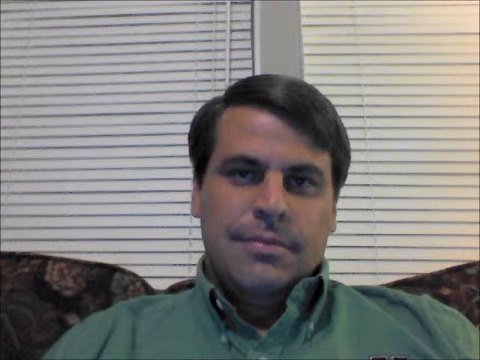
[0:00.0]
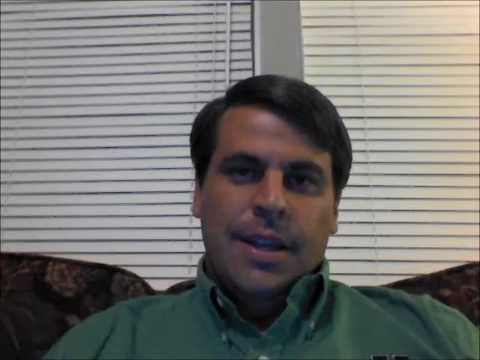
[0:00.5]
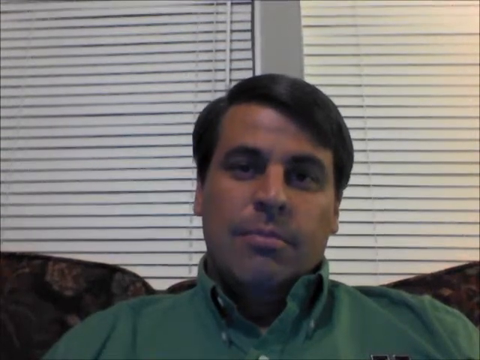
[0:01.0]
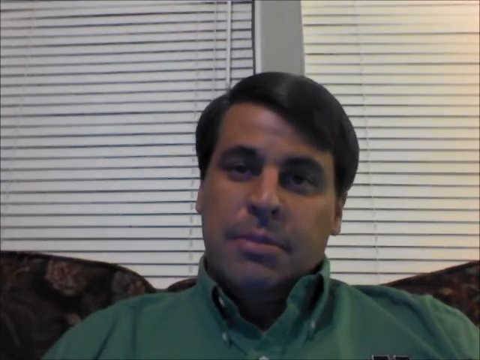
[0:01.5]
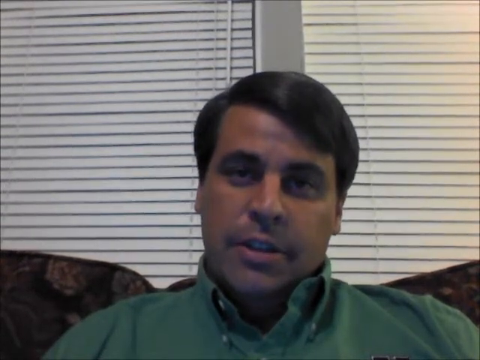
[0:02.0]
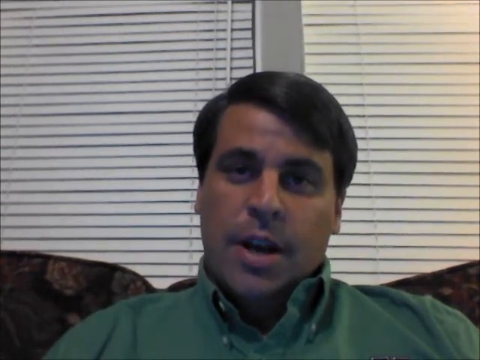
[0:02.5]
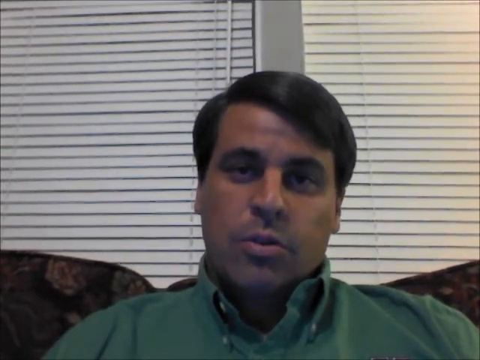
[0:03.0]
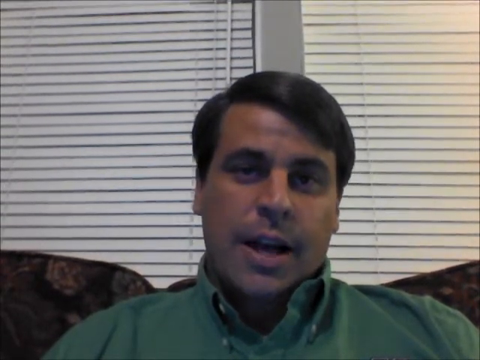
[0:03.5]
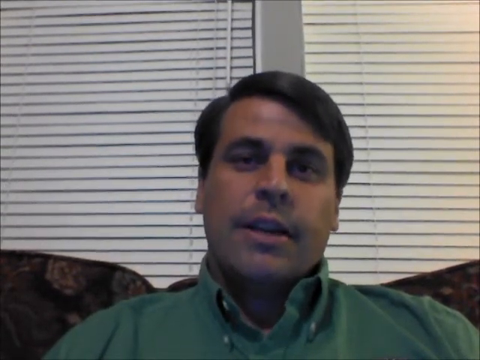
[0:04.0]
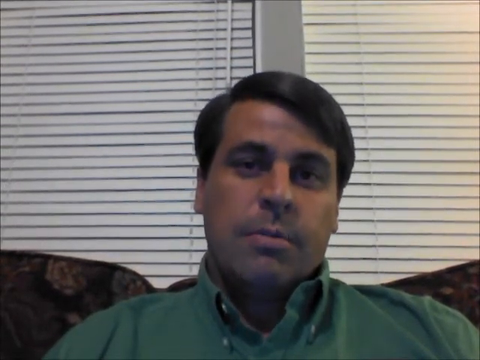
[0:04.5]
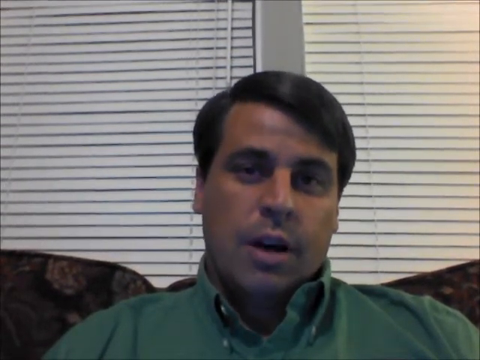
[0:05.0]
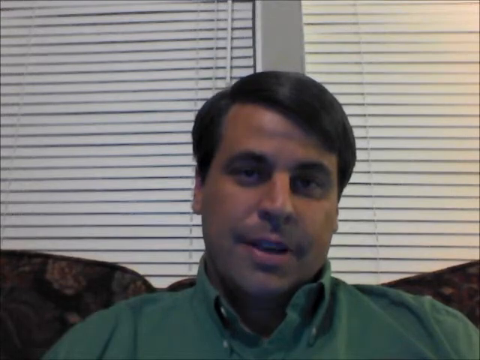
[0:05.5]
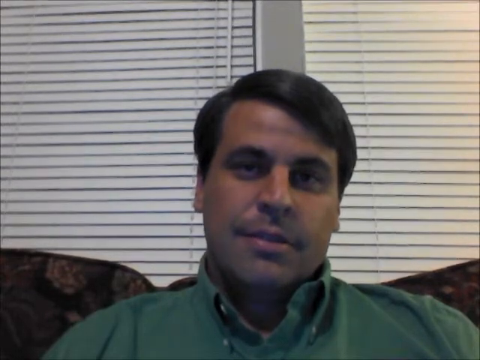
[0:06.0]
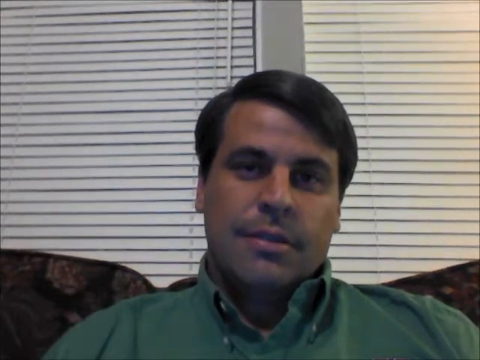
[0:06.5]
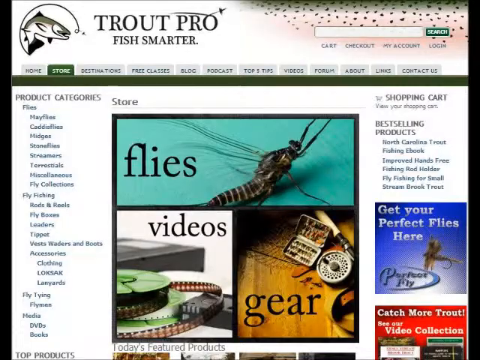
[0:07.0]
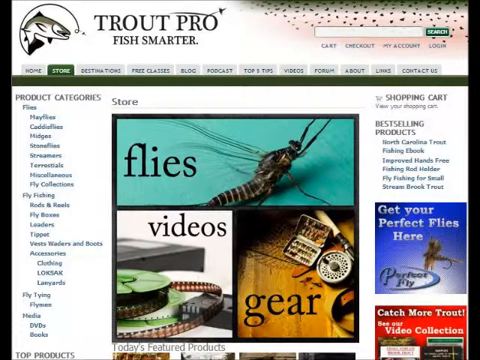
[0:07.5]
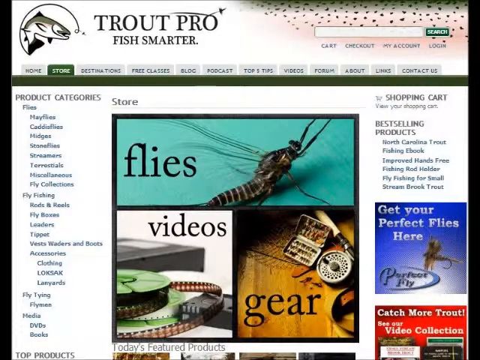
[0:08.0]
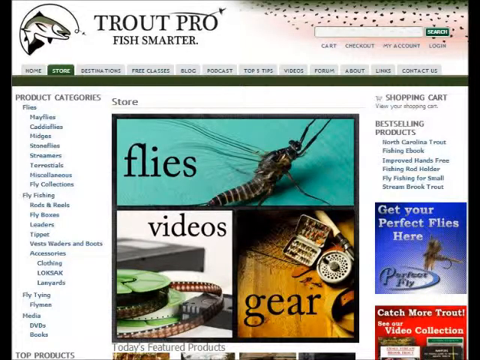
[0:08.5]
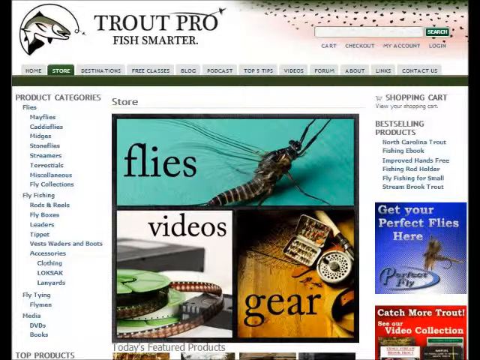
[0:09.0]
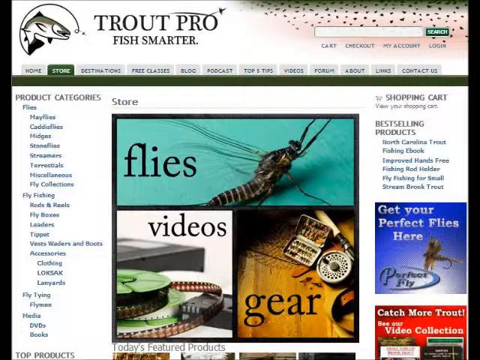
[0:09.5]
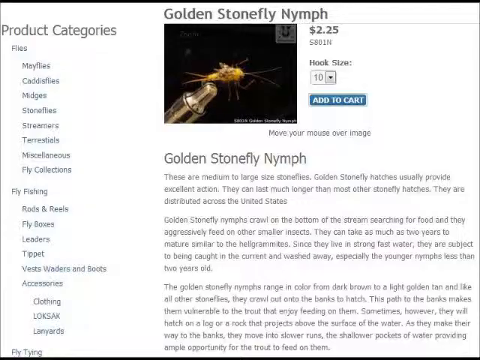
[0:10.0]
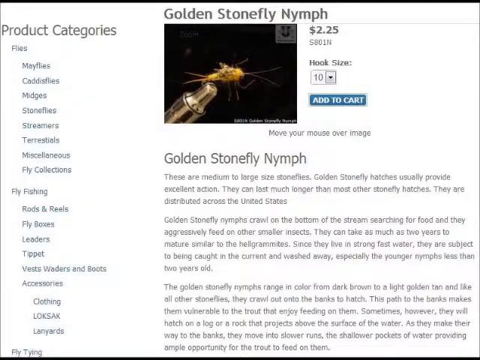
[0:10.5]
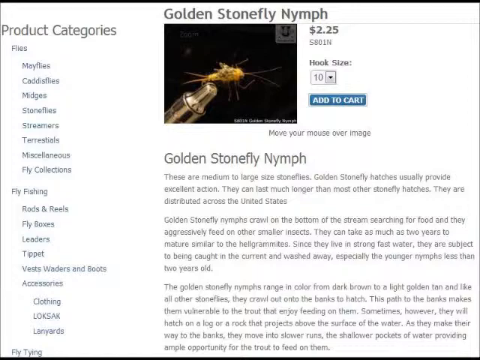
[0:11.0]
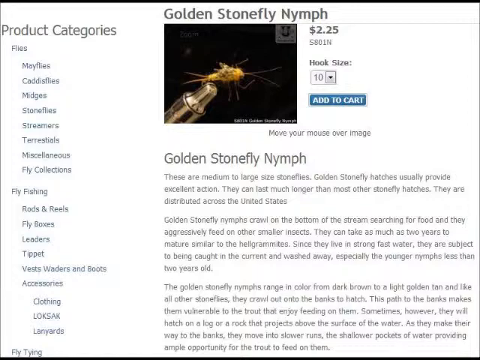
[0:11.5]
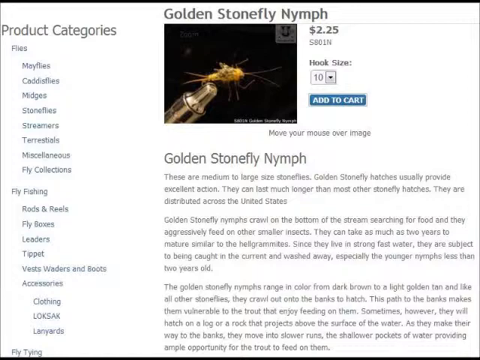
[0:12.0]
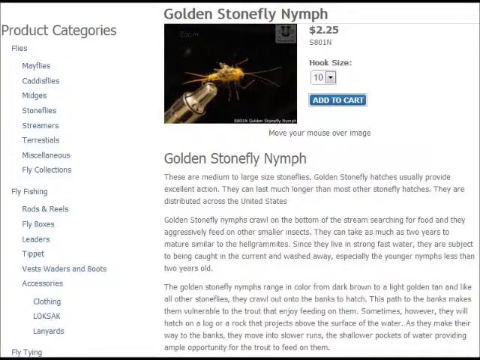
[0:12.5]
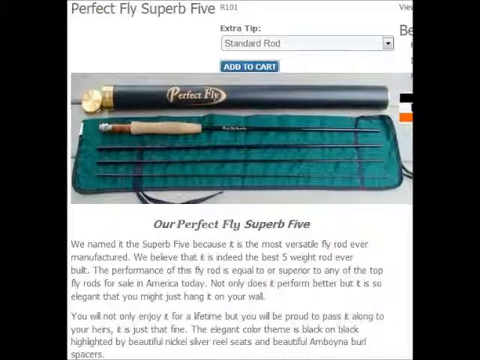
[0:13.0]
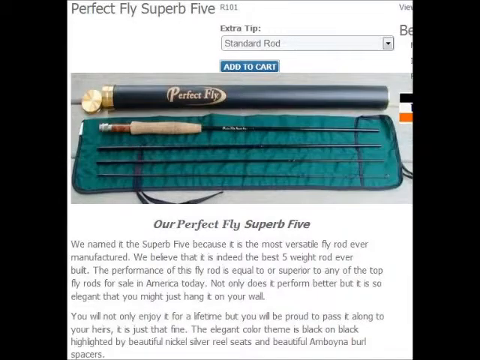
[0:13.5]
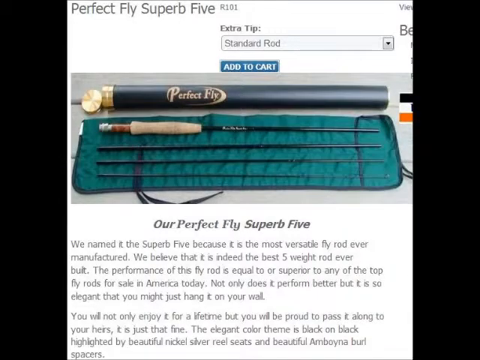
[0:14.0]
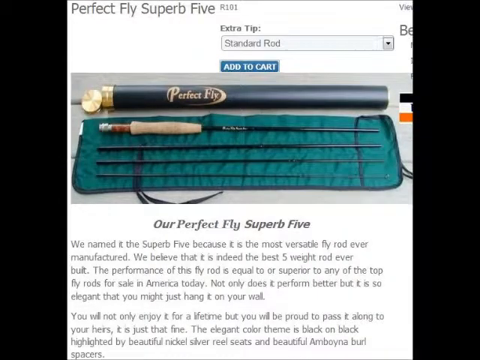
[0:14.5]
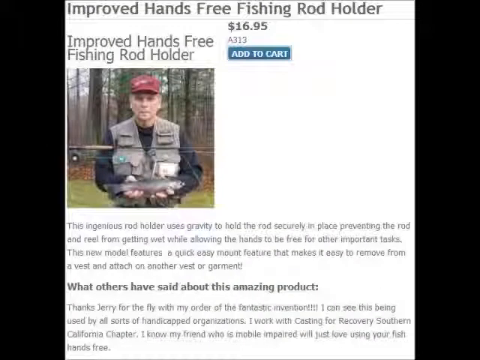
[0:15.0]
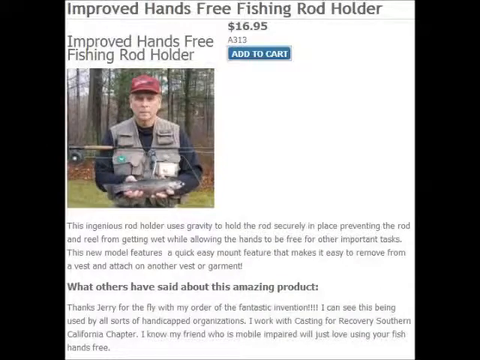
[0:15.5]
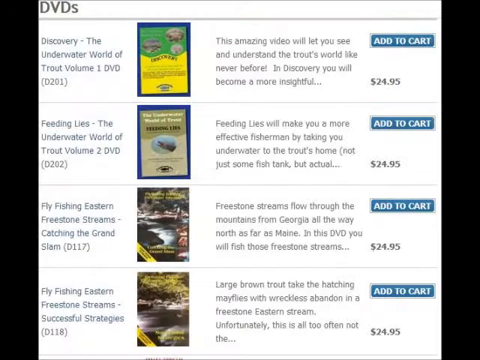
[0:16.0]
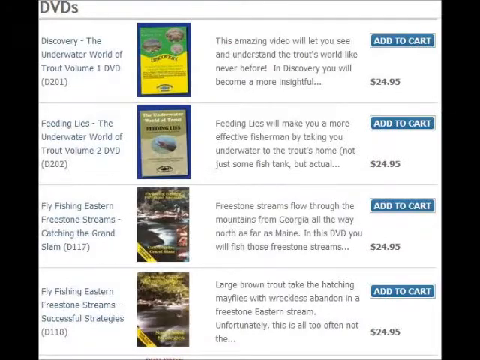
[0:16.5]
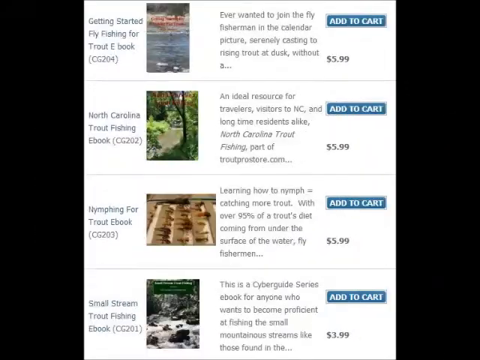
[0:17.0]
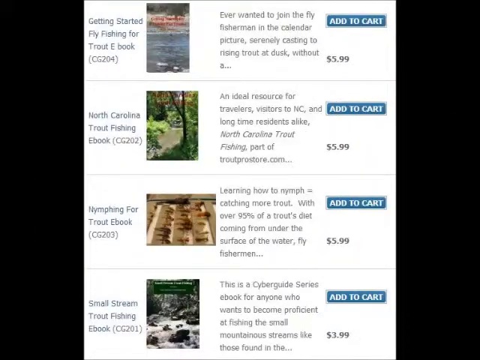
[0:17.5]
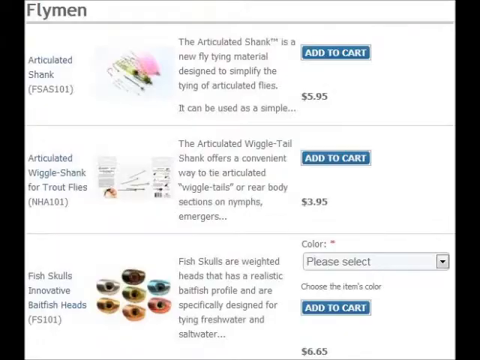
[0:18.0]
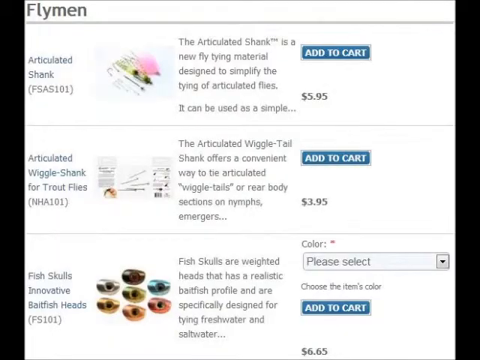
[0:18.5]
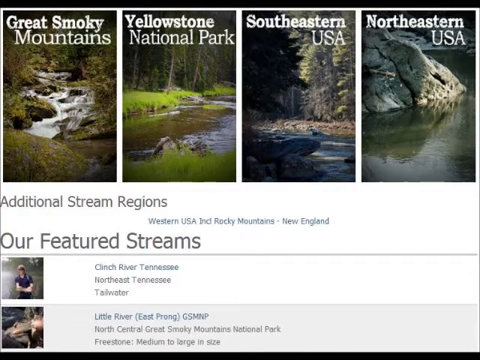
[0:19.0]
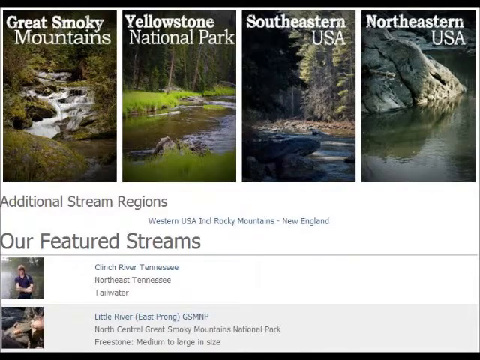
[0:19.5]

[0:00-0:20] A man is sitting down, wearing a green dress shirt. Behind him are two windows with white curtains, and the couch he is sitting on looks to be dark brown. Next comes a screenshot of a website labeled "TroutProFishSmarter" with several words on it. This is followed by a screenshot of an article whose text includes "golden stonefly nymph. These are medium to large size stoneflies. Golden stonefly hatches usually provide excellent action. They can last much longer than most other stonefly hatches. They are distributed across the United States. Golden stonefly nymphs crawl on the bottom of the stream searching for food and they aggressively feed on other smaller insects." It also includes the line "Our Perfect Fly Superb 5, we named it the Superb 5 because it is the most versatile rod ever manufactured."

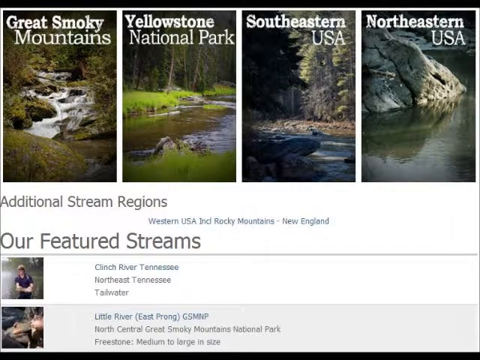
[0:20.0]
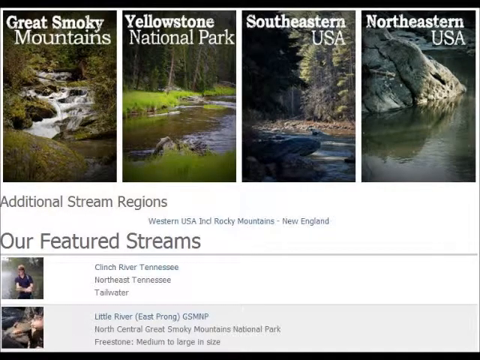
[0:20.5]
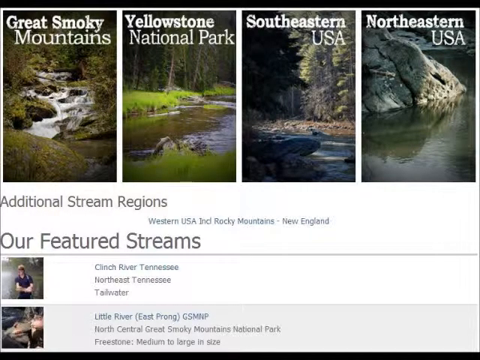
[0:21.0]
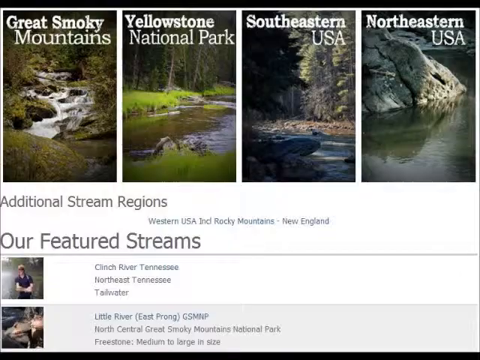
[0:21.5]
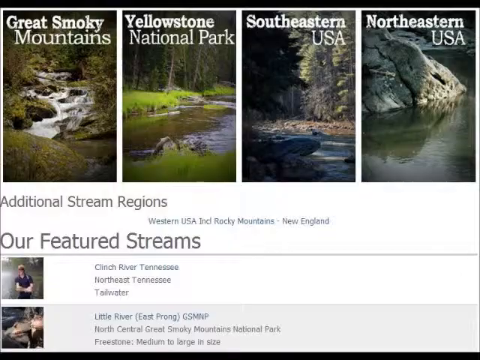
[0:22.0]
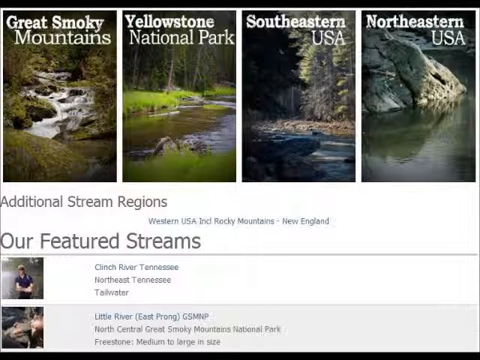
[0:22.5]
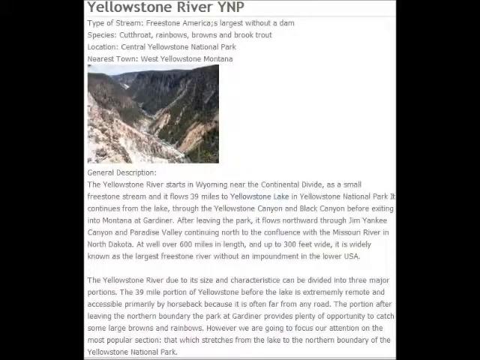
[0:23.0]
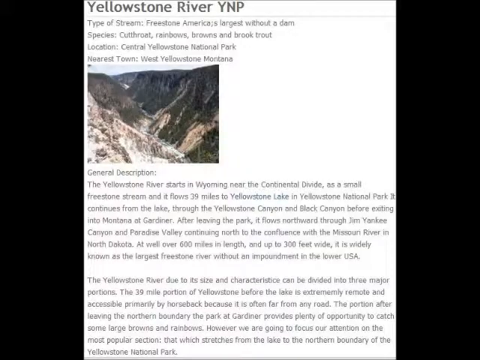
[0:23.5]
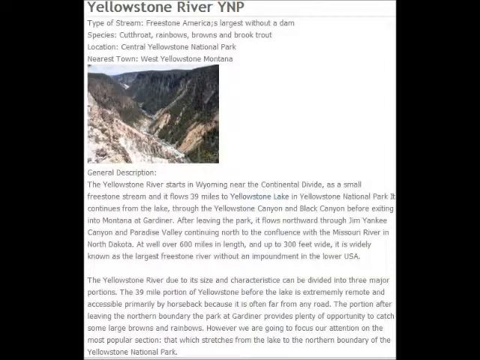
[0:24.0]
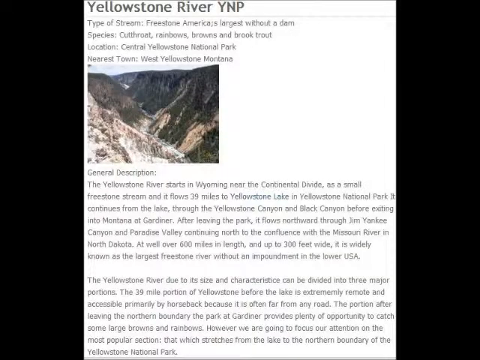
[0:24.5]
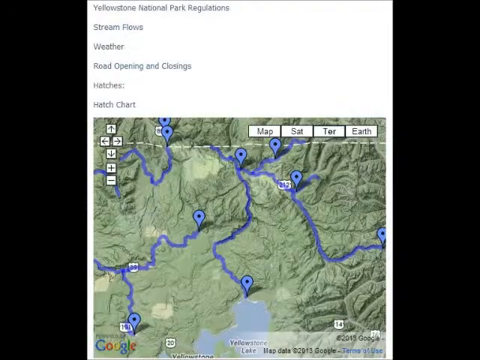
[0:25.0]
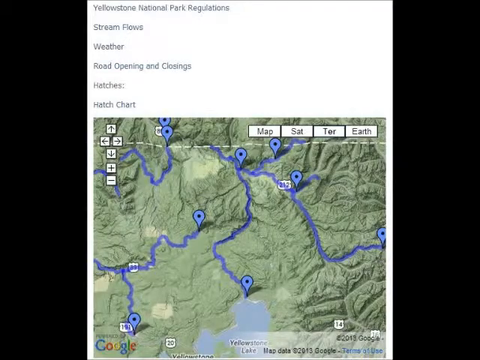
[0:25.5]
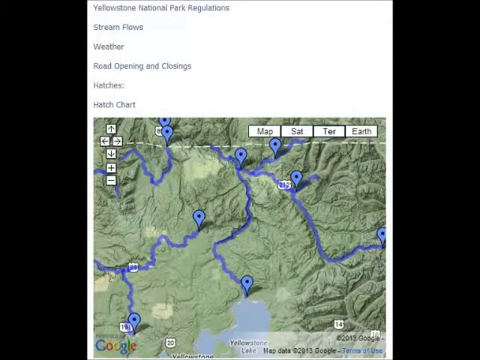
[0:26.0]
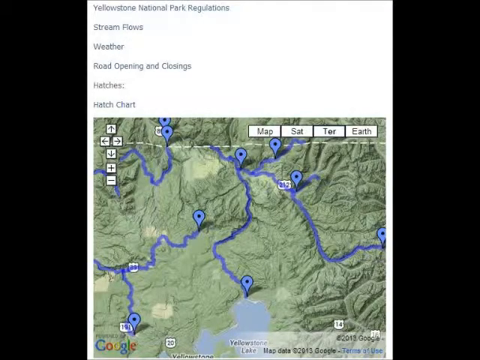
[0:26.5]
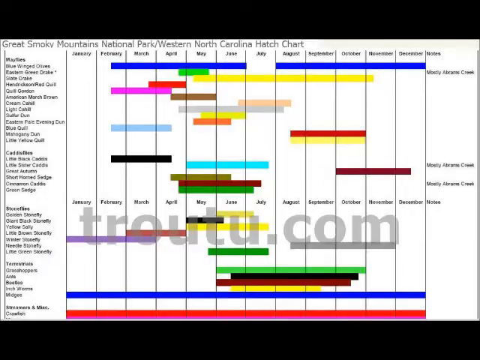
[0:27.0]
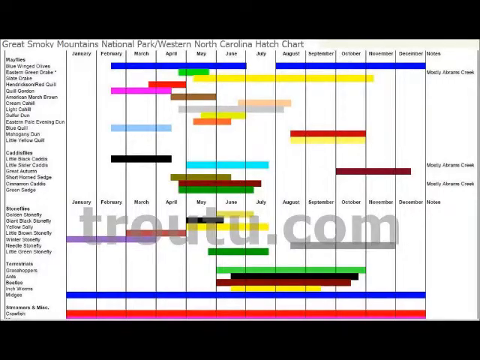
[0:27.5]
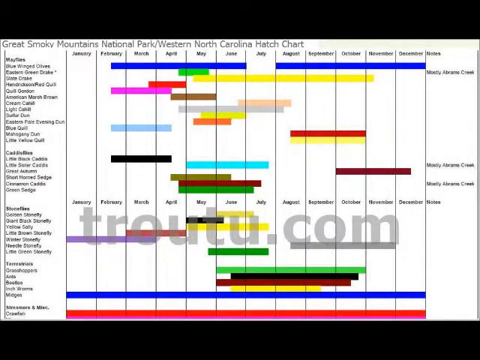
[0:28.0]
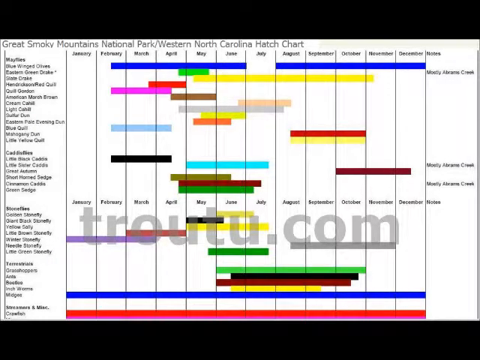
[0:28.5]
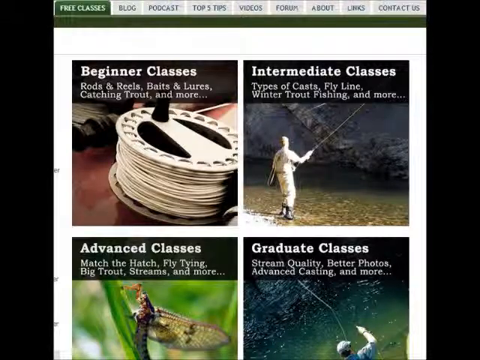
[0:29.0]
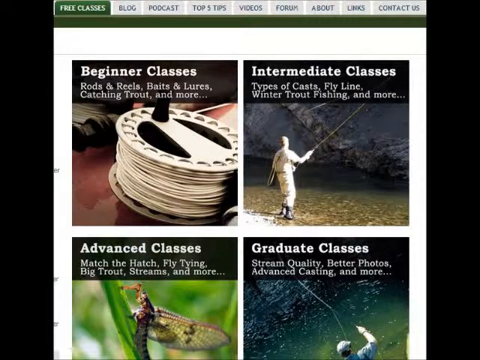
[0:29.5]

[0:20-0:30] Another screenshot appears with several words on it, including "Great Smoky Mountains, Yellowstone, National Parks, Southeastern USA, Northeastern USA, additional stream regions, Western USA, Inc., Rocky Mountains, New England, our future streams, Clinch River, Tennessee, Northeast Tennessee, Tailwater, Little River, East Prong, GSMNP, North Central, Great Smoky Mountains, National Park, Yellowstone River, YMP, type of stream, Freestone America, largest without a dam, species Cutthroat Rainbows, Browns and Brook Trout, location, Central Yellowstone National Park, nearest town, West Yellowstone, Montana" and "Beginner classes". The entire video is rectangular in shape and entirely computer generated.